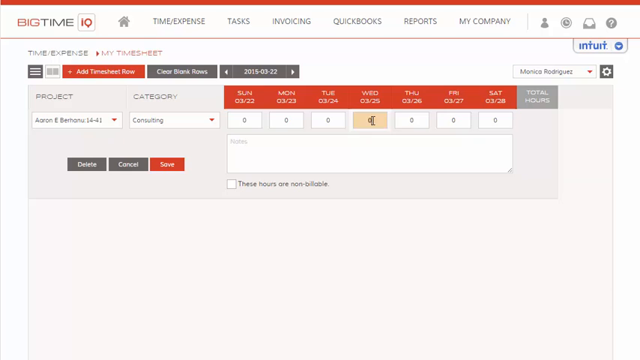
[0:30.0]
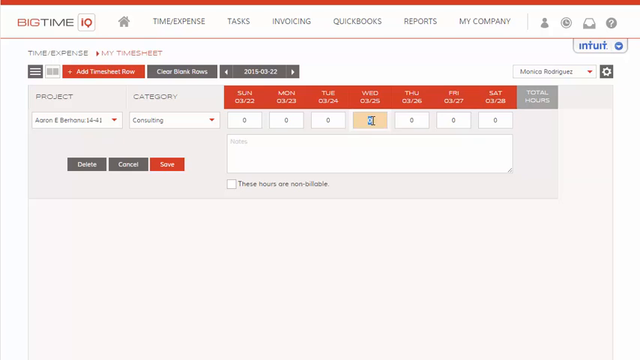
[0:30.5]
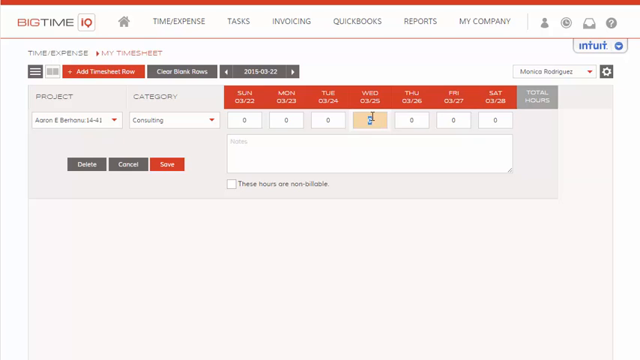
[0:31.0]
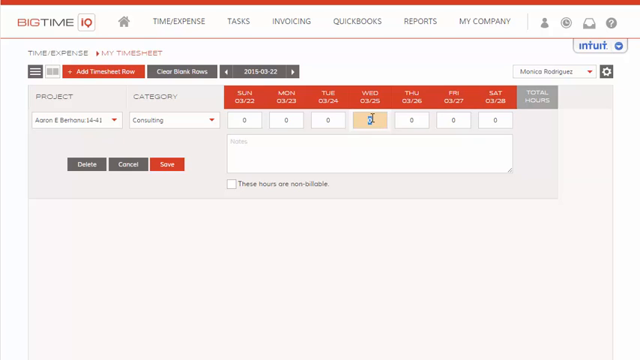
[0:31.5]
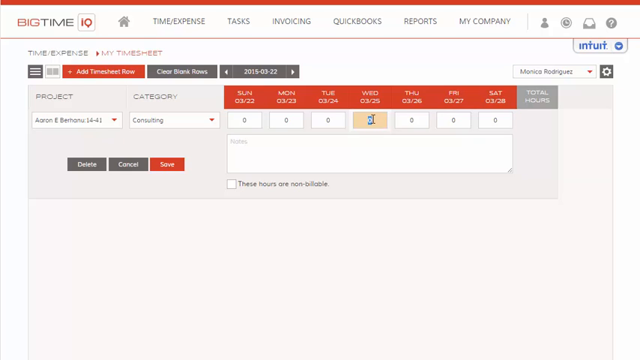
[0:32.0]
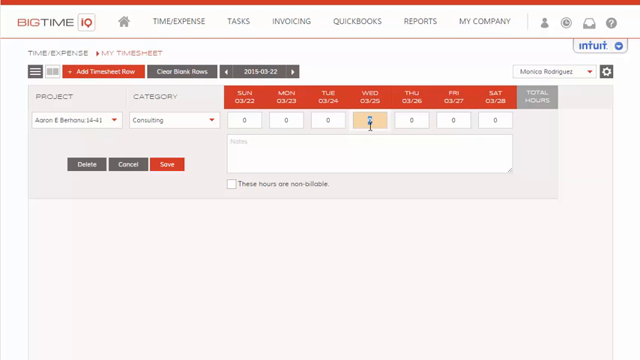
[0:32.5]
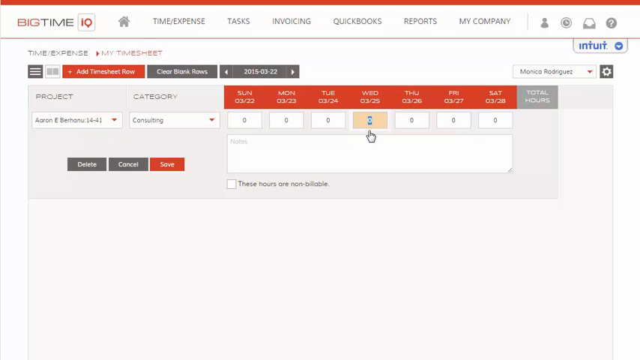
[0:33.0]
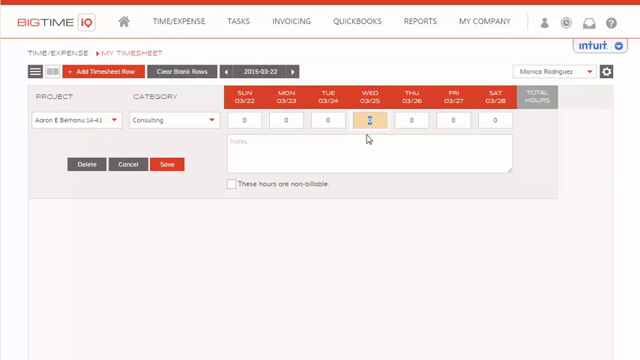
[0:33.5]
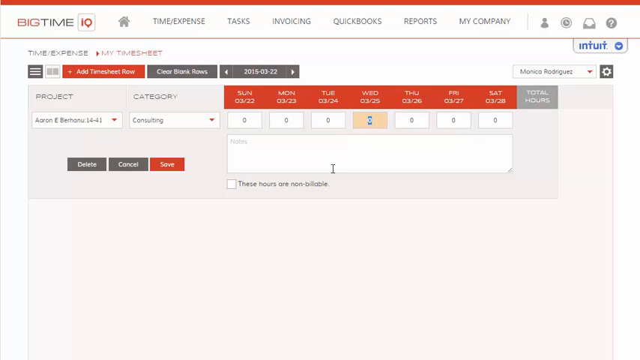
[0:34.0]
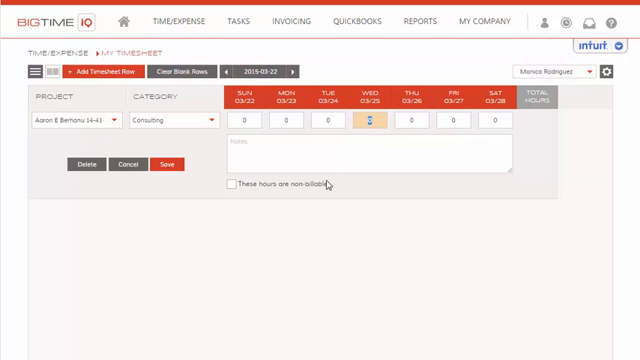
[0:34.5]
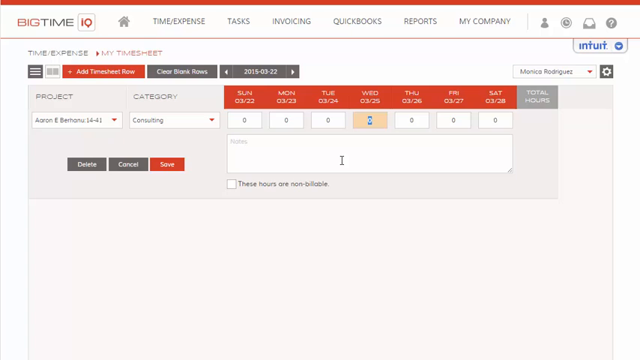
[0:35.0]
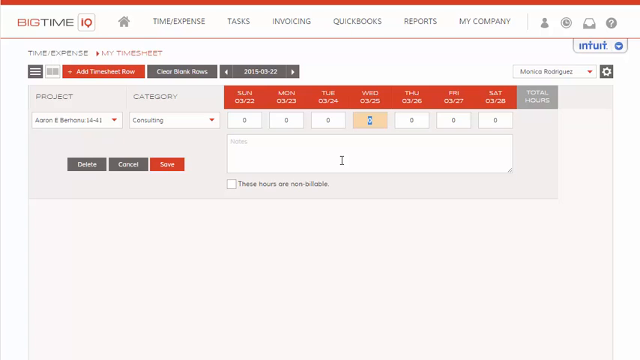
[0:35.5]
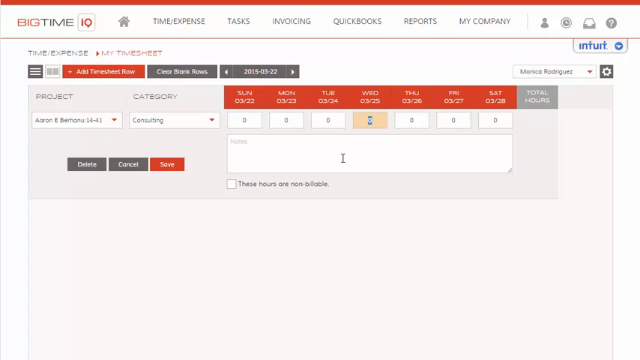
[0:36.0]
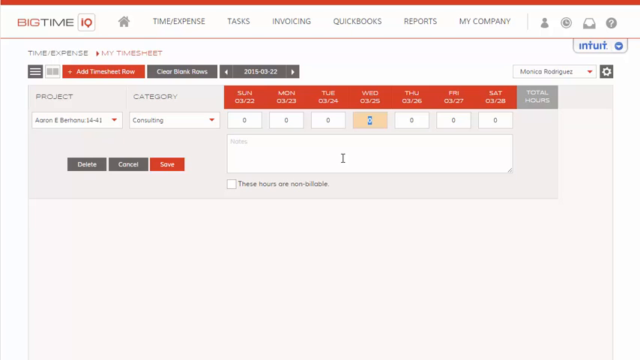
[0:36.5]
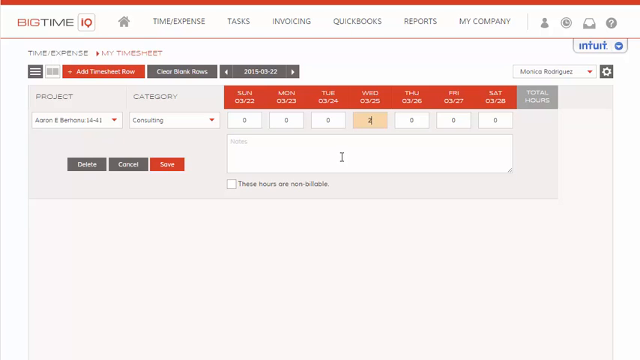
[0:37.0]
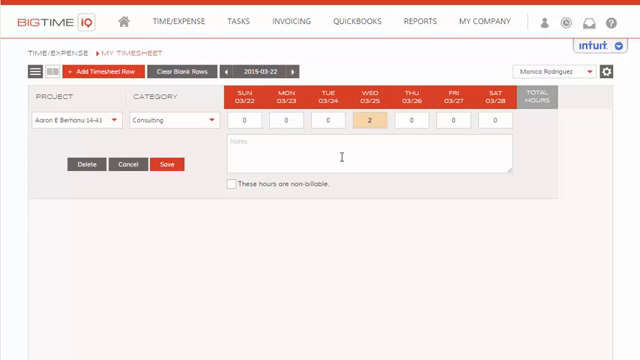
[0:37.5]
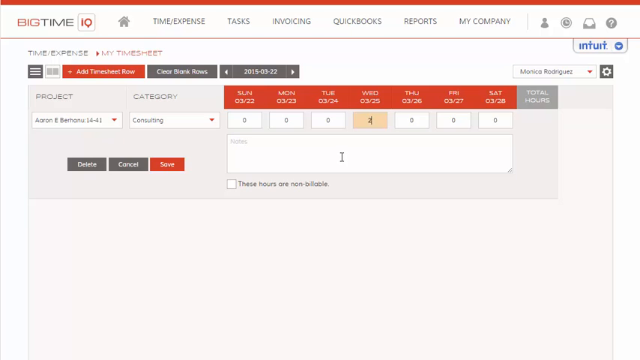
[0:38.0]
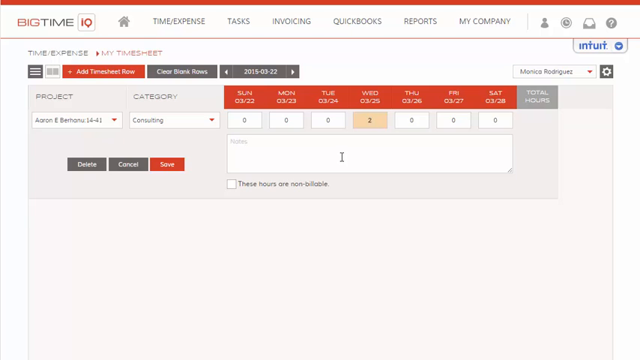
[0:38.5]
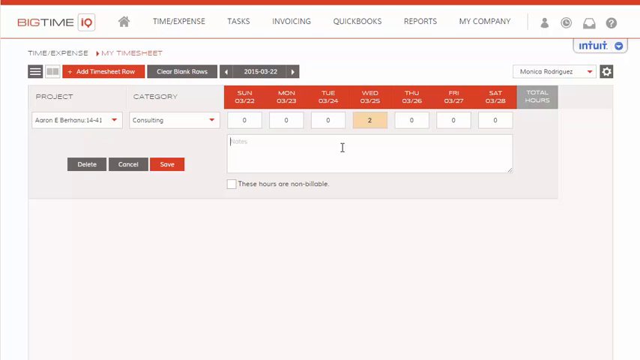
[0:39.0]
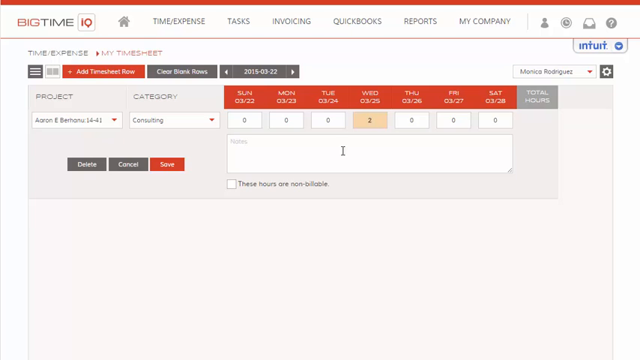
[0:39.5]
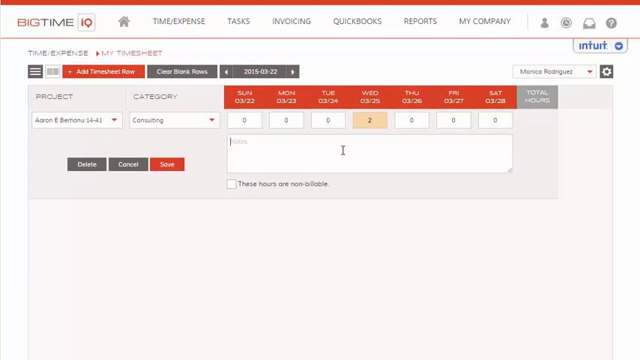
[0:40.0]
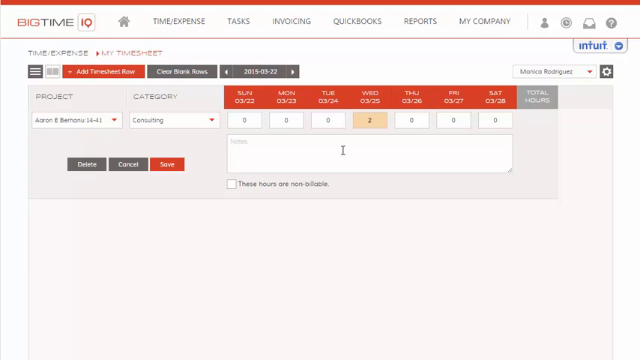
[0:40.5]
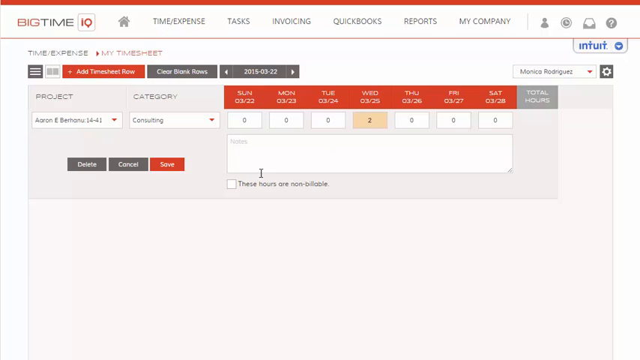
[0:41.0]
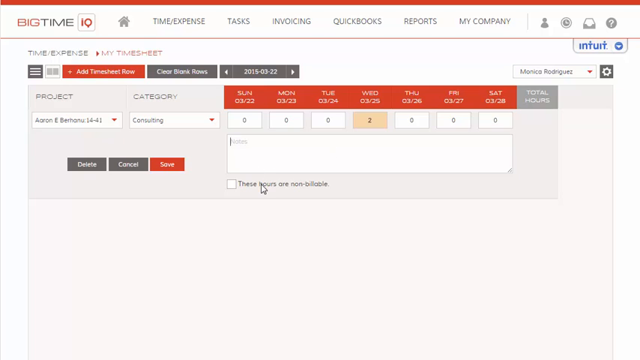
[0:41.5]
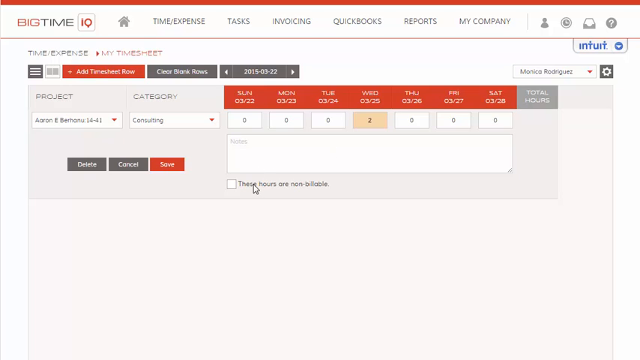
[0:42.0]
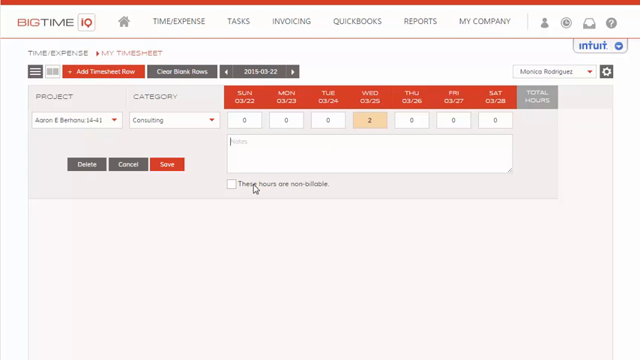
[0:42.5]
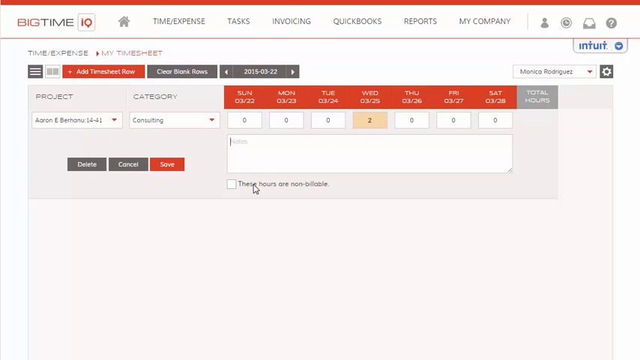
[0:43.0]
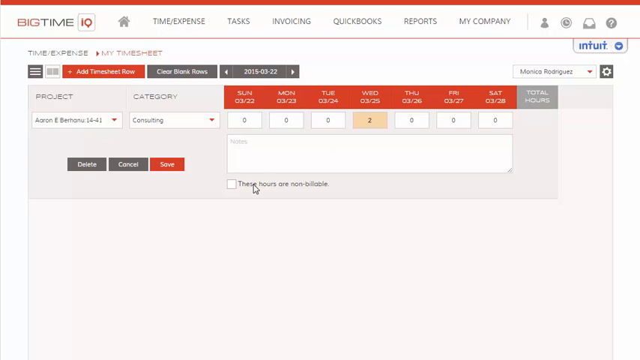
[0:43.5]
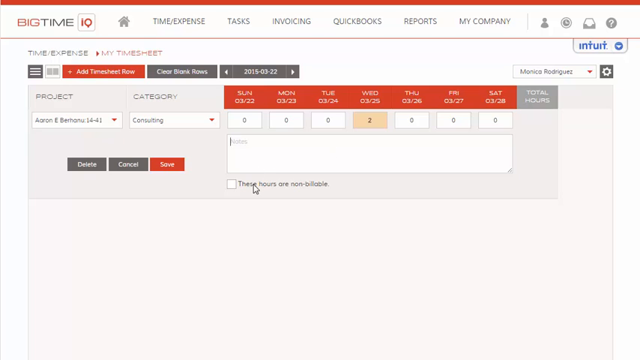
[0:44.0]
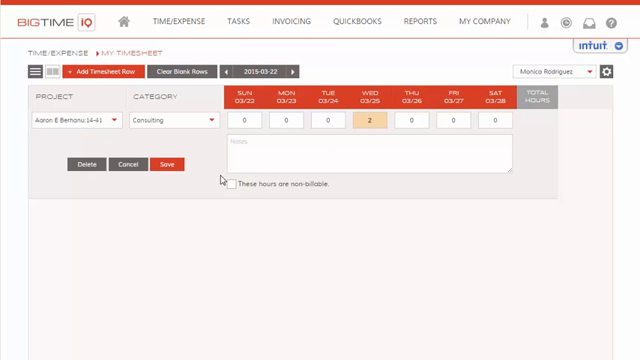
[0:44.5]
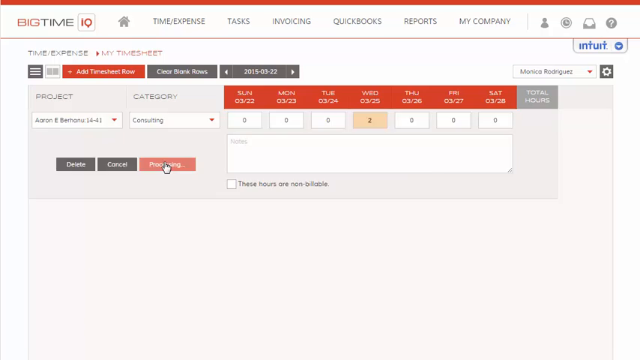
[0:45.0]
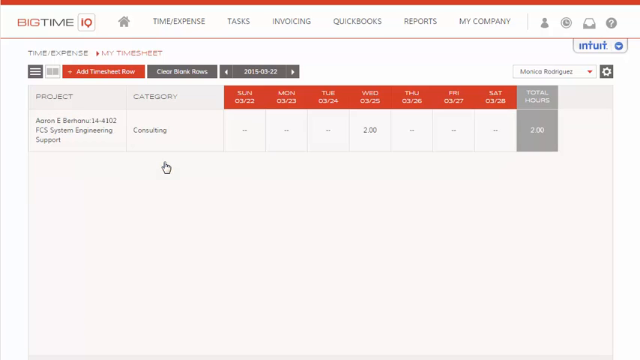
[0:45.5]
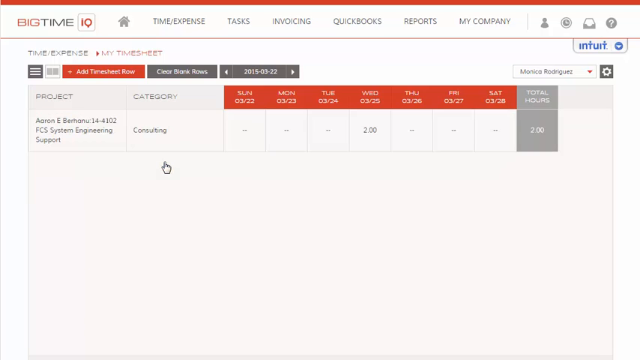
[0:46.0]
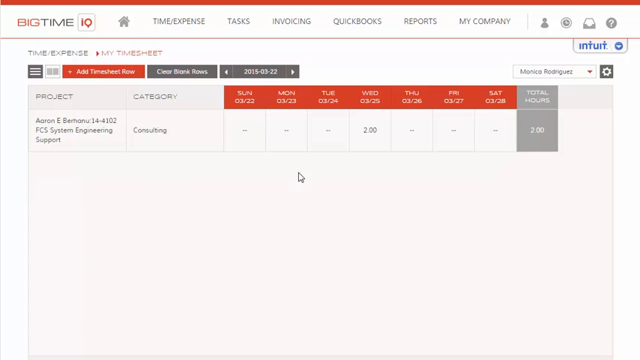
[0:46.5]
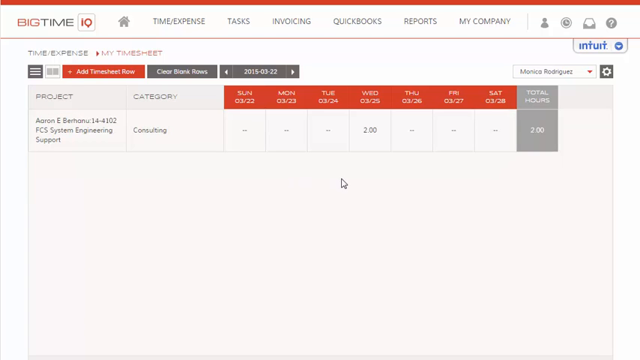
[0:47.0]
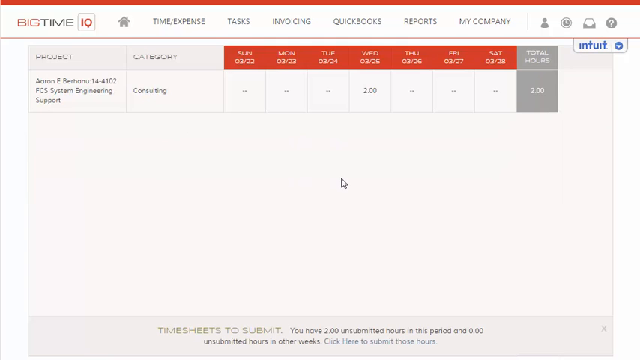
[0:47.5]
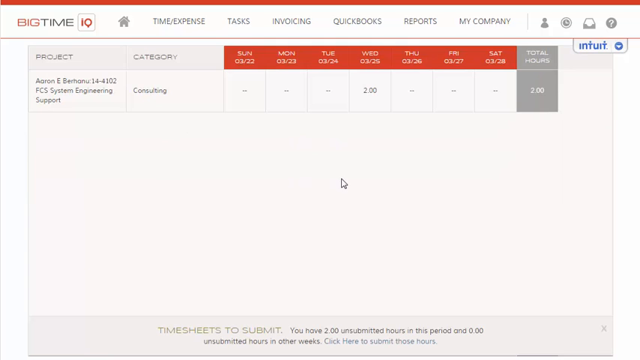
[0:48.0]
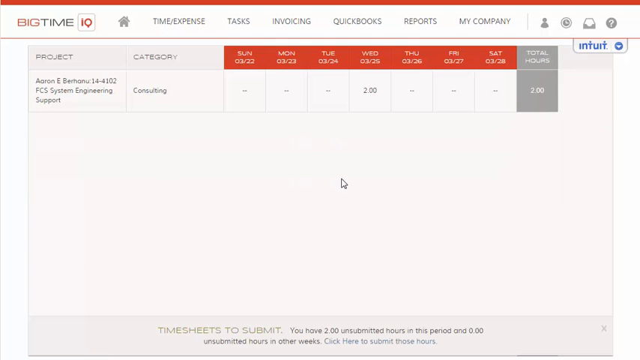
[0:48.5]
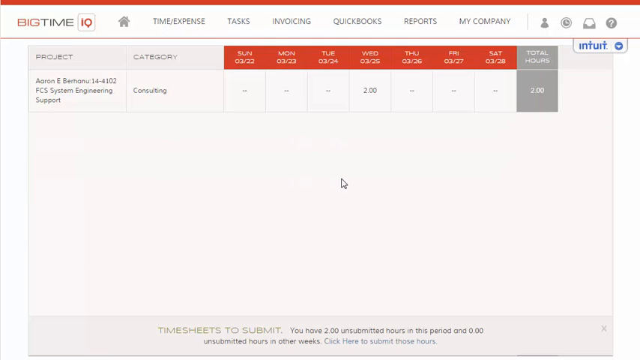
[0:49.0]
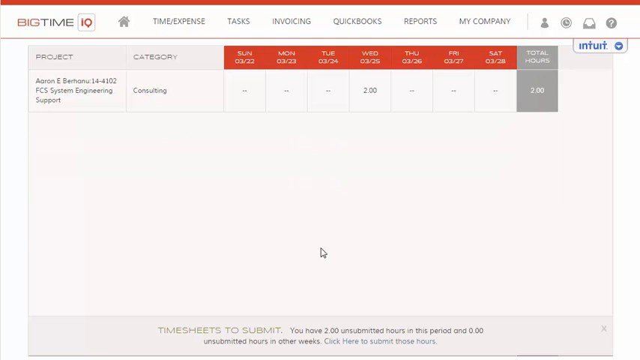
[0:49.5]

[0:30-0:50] Wednesday is highlighted, with the zero highlighted in blue. A notes section pops up with notes in it, and below it is a checkbox labeled "these hours are non-billable," which is left unchecked. The user enters two hours for Wednesday, and the box turns a sort of orange color. Delete, cancel and save buttons are shown, and the user hits save. The filled-out timesheet shows the project "Aaron E Bernhall 14-4102 FCS system engineering support," category consulting, and "2.00" under Wednesday, with a dash under every other date. The total hours box is gray and reads two. All the font in the gray box is white, and all the font in the red boxes is also white.